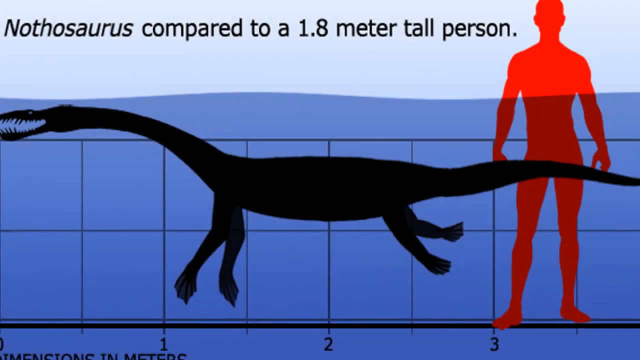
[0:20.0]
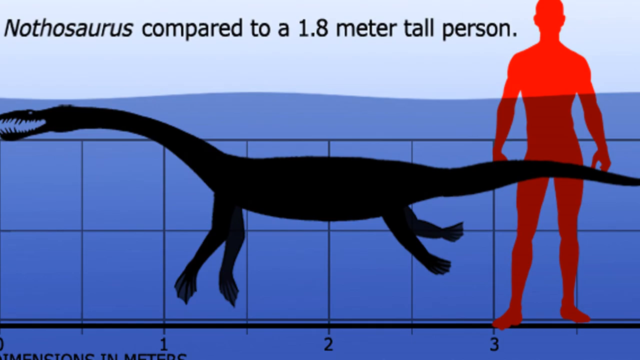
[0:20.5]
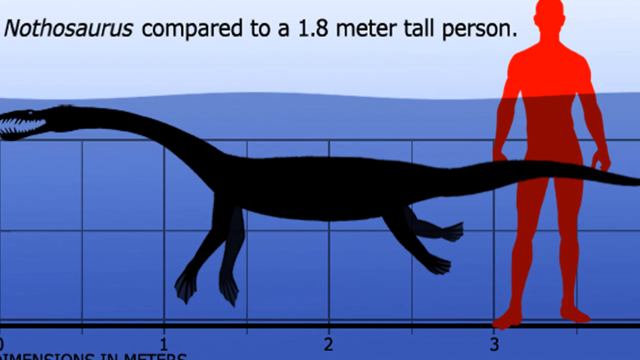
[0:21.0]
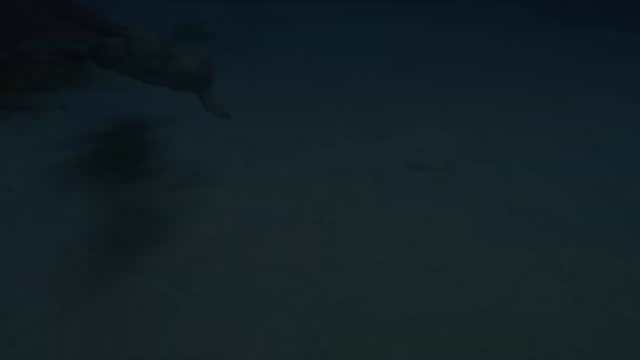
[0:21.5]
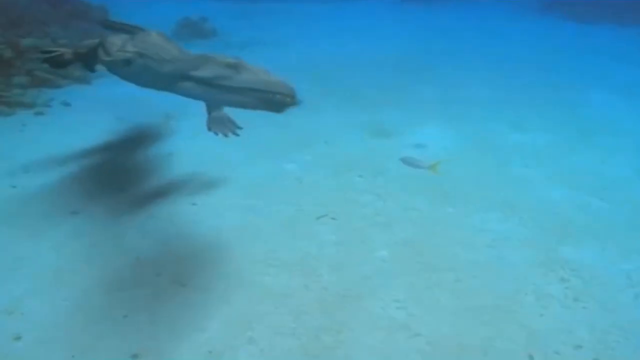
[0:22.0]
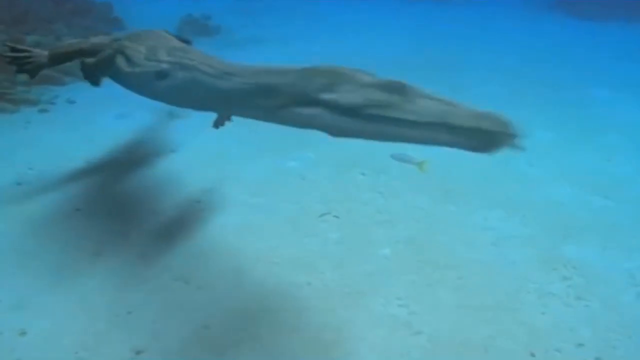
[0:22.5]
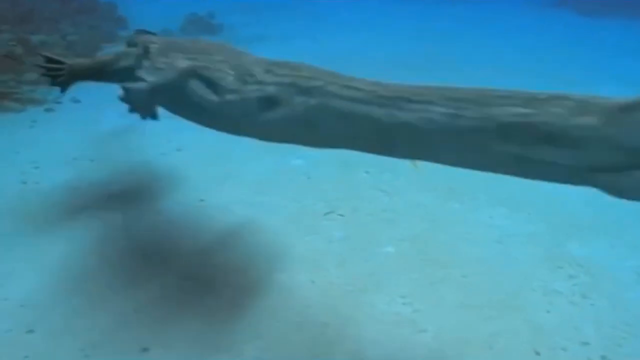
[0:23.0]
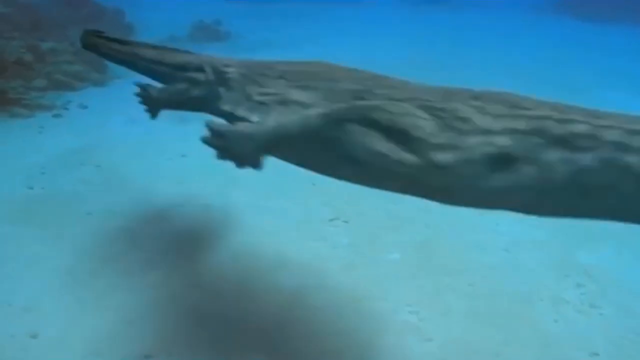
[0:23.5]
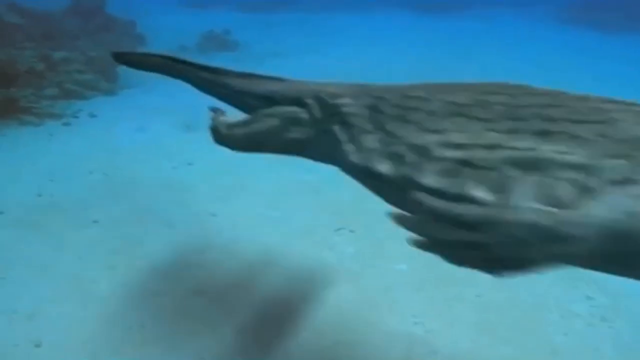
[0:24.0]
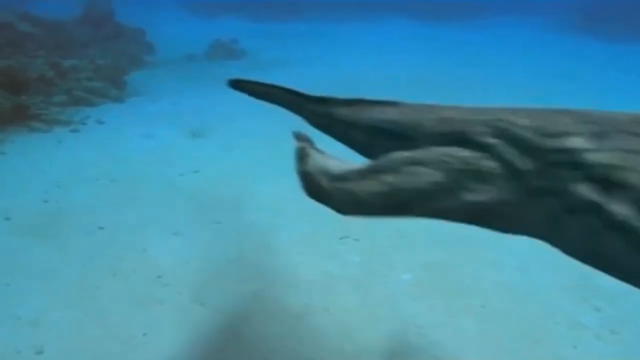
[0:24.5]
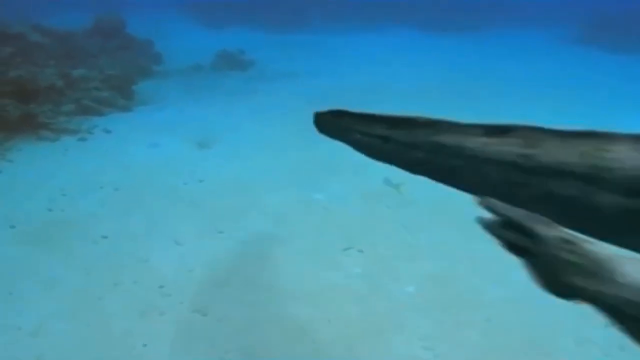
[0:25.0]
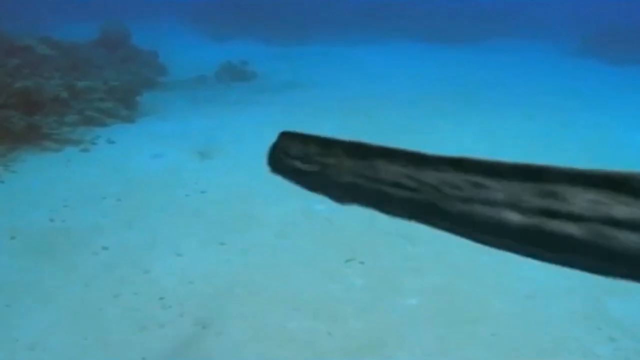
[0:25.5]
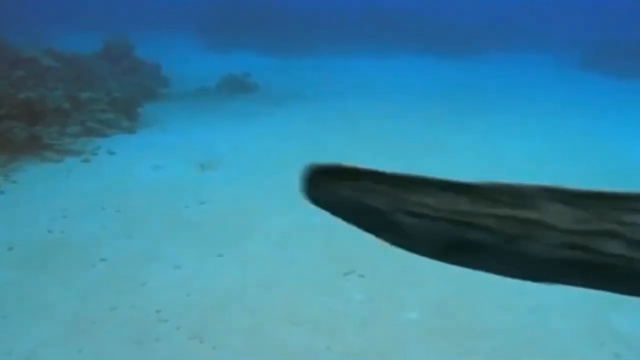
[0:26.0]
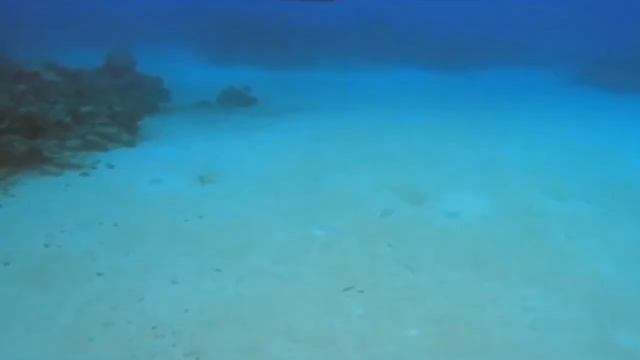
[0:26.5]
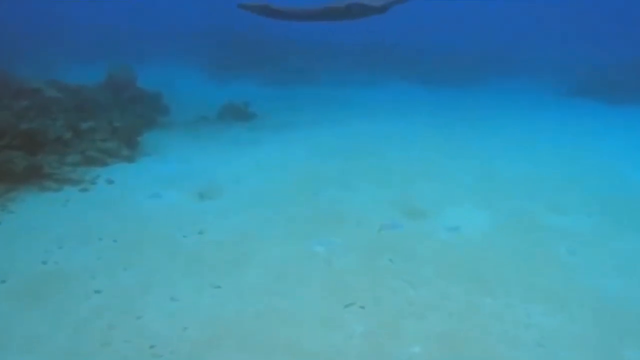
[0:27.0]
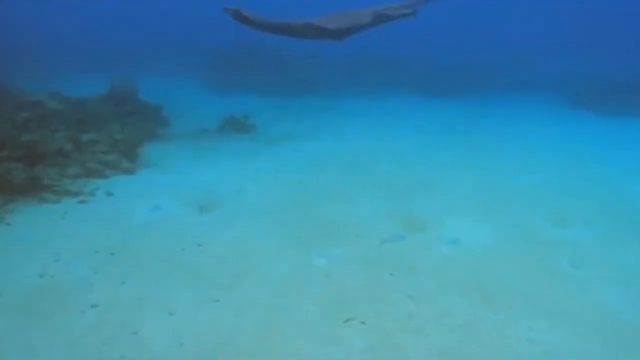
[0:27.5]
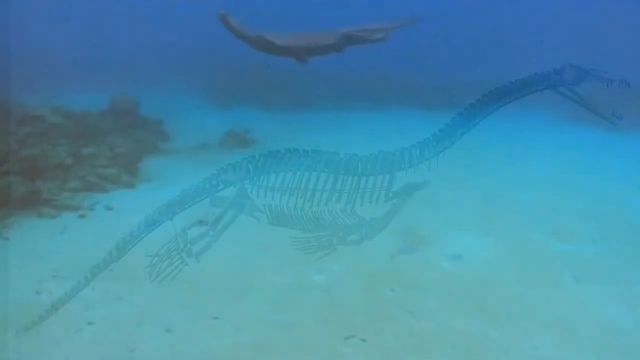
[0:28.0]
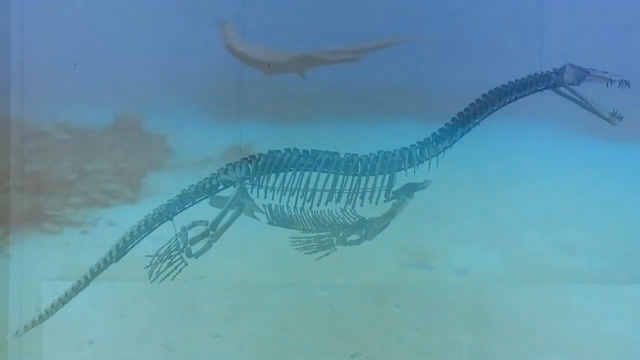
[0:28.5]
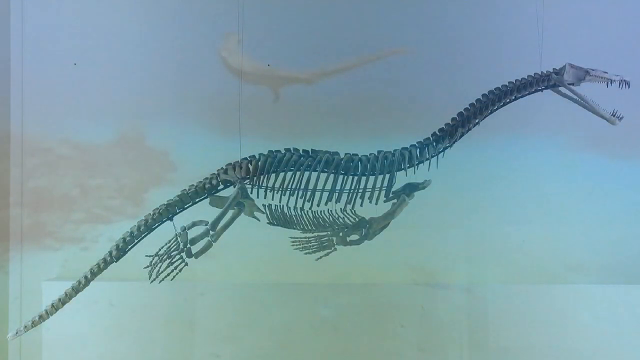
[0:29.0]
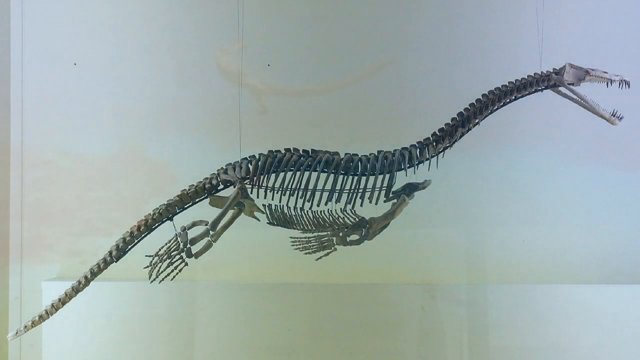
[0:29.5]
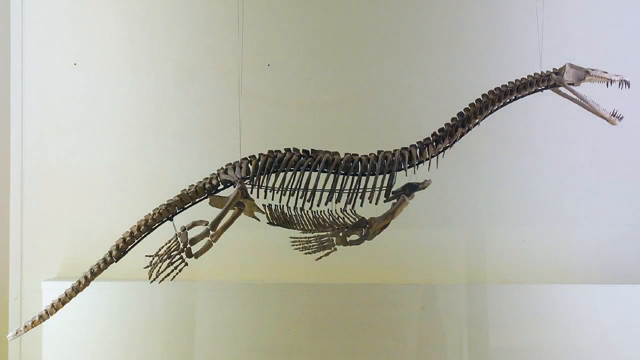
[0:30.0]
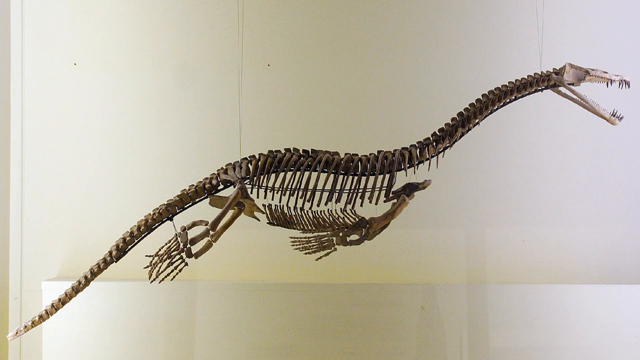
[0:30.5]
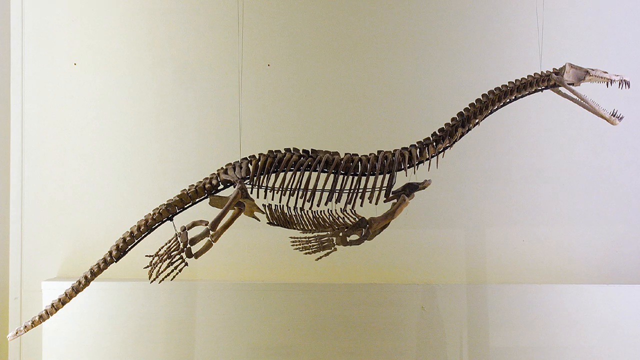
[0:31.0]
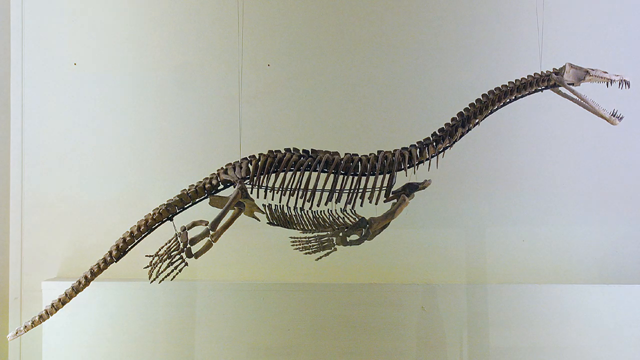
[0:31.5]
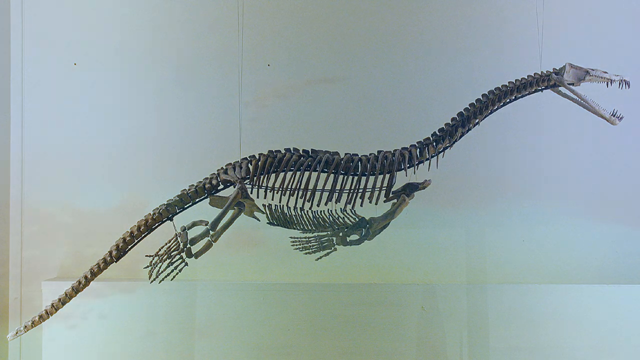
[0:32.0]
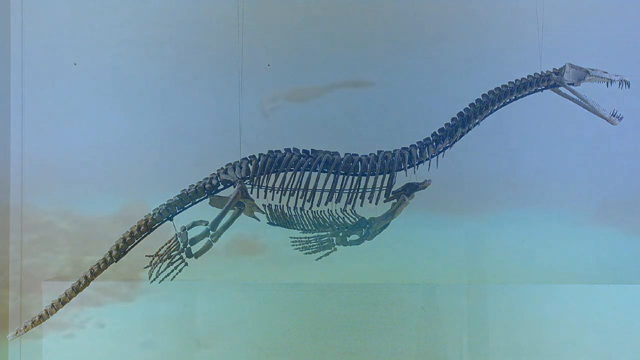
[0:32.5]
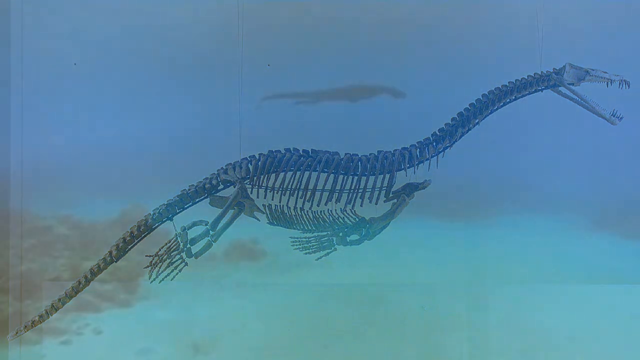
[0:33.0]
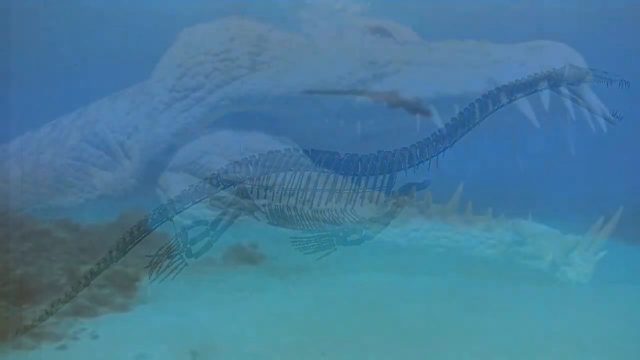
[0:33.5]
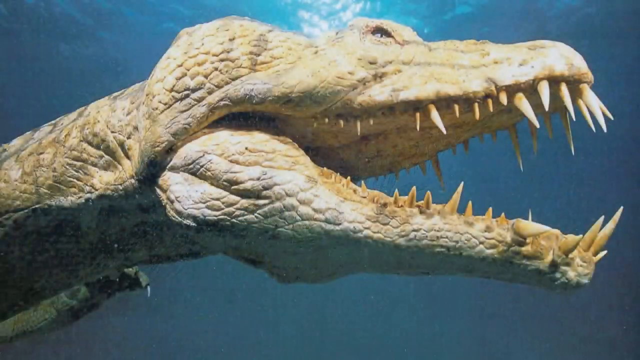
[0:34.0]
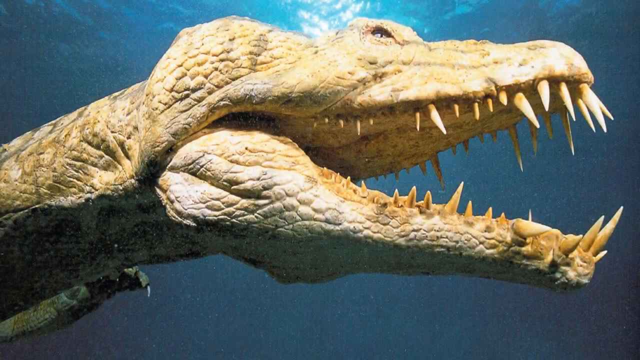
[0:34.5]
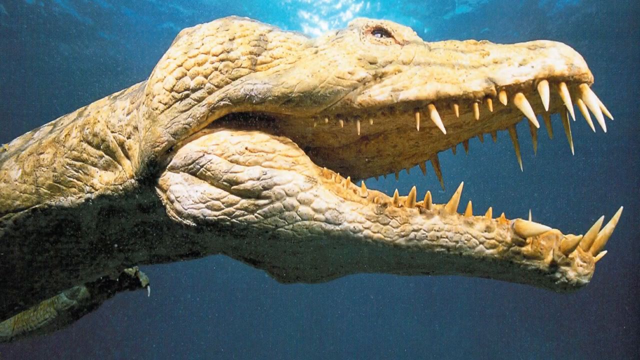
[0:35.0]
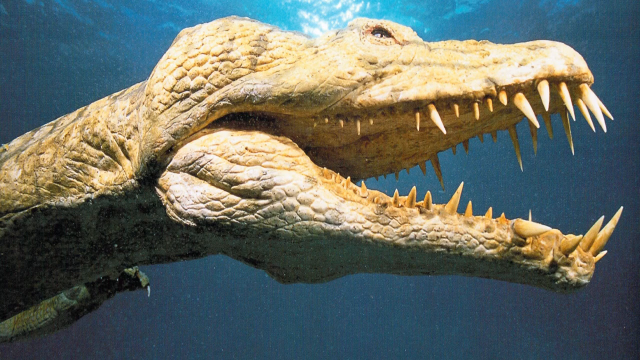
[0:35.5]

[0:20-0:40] A Nathosaurus is shown compared to a 1.8 meter tall person. A black silhouette of the dinosaur swimming under the water stretches across the whole frame from left to right, and on the right is the 1.8 meter tall person, a man shown in red, for comparison. The video then shows a rendition of what these creatures would look like swimming under the water, with two of them swimming elegantly. Next, the skeletal remains of this type of dinosaur hang in a museum, showing all the bones, the feet and the very sharp teeth. A close-up of the face follows, with very sharp pointy teeth coming out and little tiny eyes on top of its head; the head almost resembles that of a snake. The creature's texture is kind of beige, green and tan.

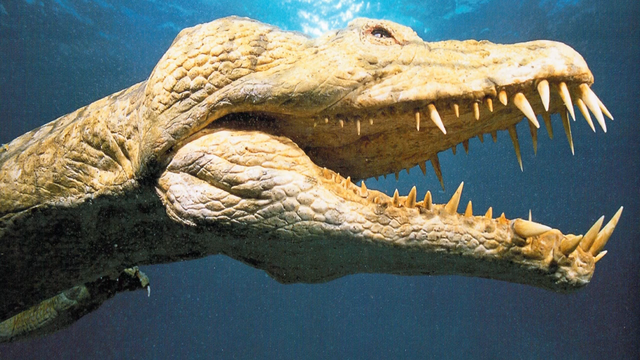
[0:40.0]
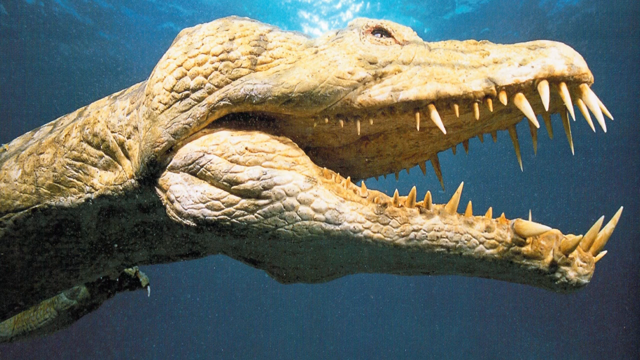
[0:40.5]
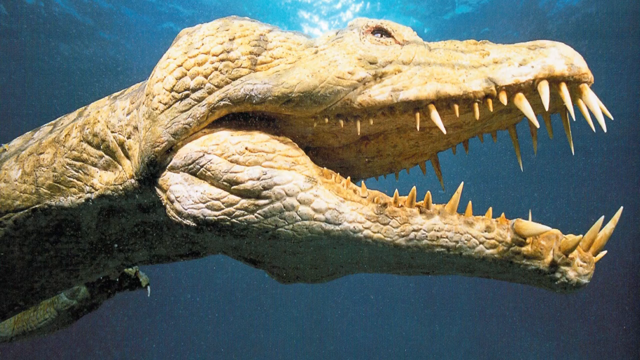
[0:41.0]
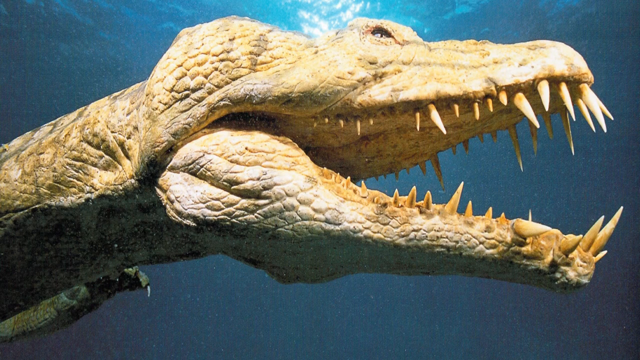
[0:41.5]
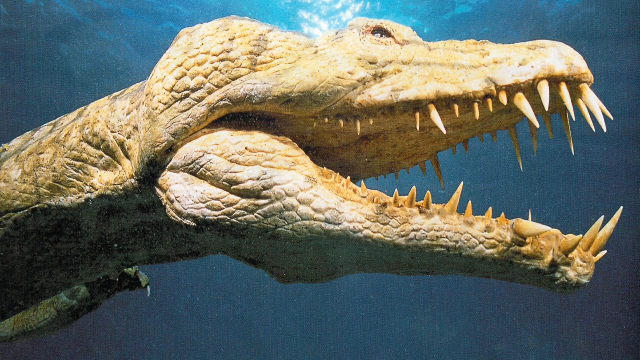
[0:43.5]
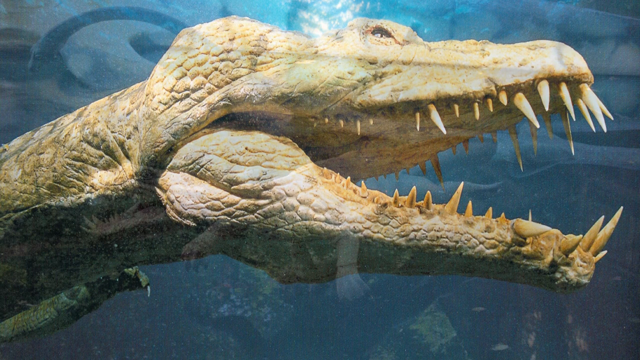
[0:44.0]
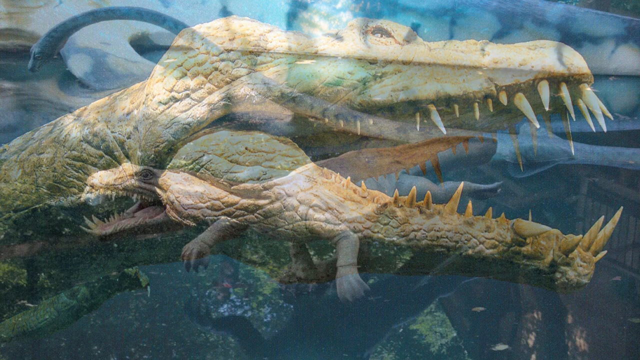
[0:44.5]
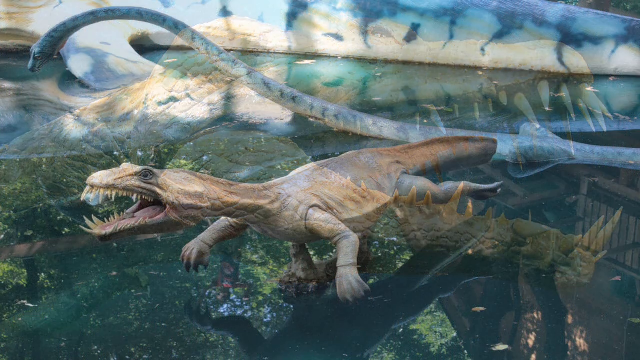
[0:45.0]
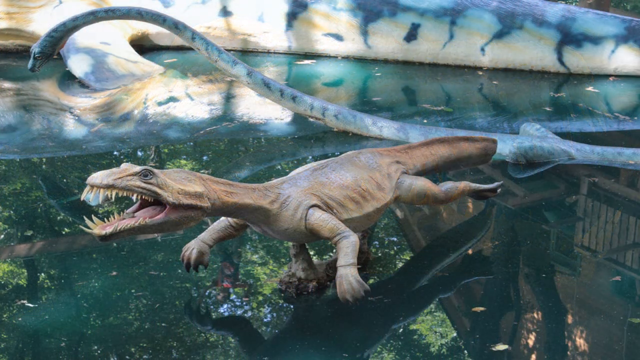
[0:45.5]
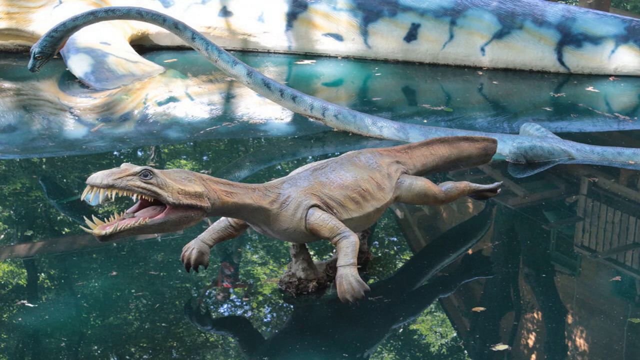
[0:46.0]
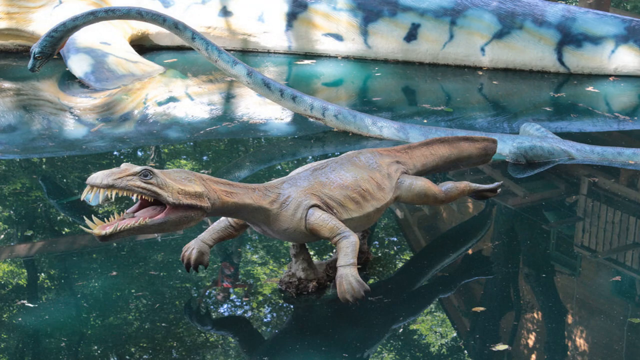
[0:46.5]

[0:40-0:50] A dinosaur-like creature appears whose head kind of looks like a snake's head blown up really big. It has pointy claws at the ends of its arms and very long, sharp, pointy teeth, some of them kind of tiny, and it almost looks similar to an alligator. Light shines above the creature's eyes as it swims in water that is kind of teal blue. The creature is kind of tan and beige with a little green, and there is a little yellow on the teeth. The video then shows a drawing of what the creature possibly looked like, with really strong jutting teeth that kind of curve up, eyes on top of its head, and four legs that almost make it look like a lizard.